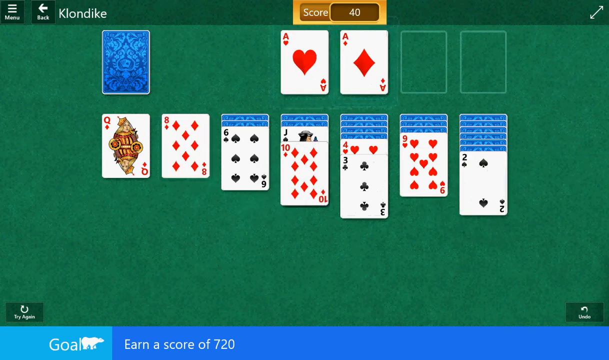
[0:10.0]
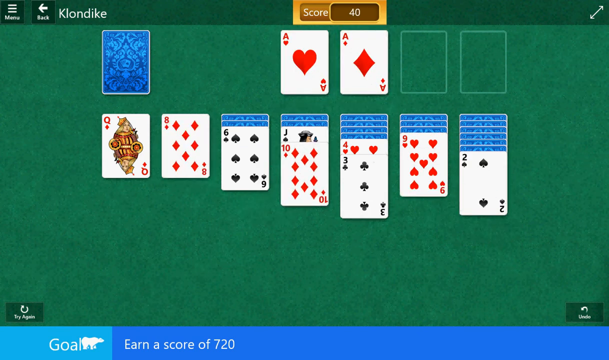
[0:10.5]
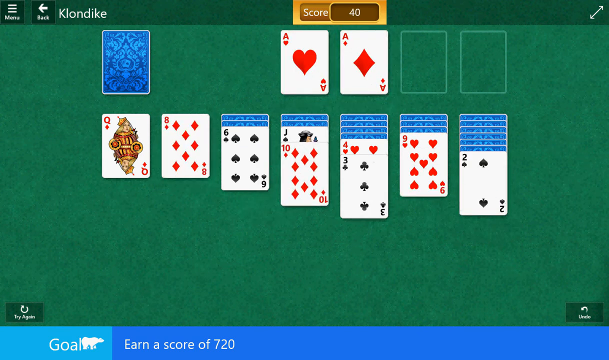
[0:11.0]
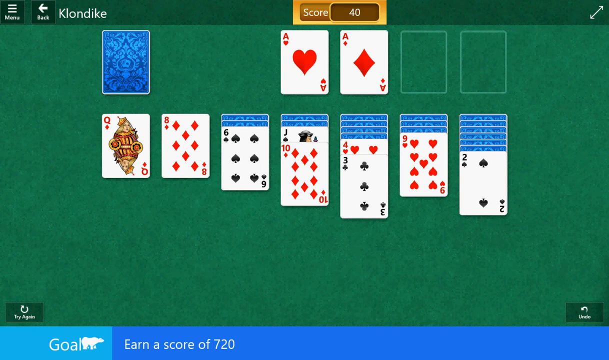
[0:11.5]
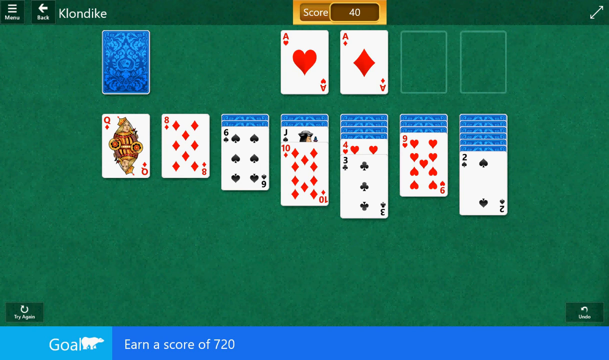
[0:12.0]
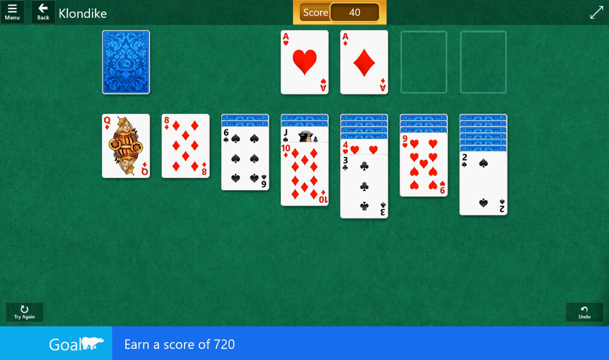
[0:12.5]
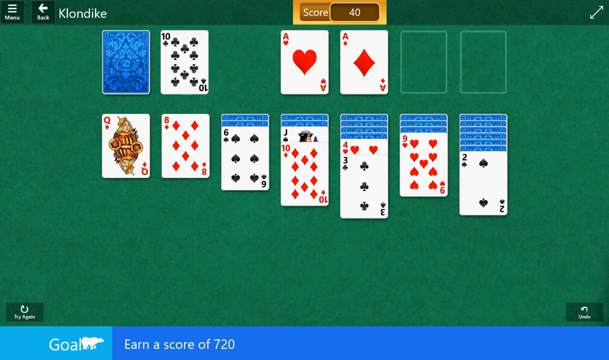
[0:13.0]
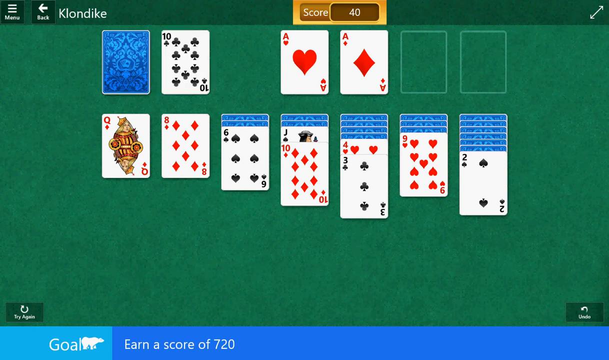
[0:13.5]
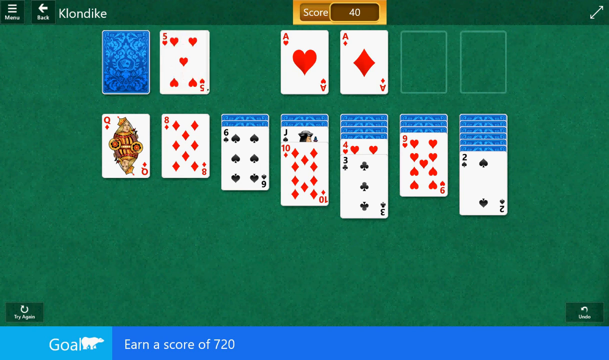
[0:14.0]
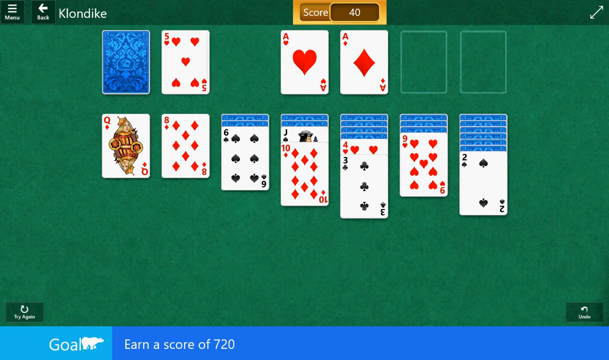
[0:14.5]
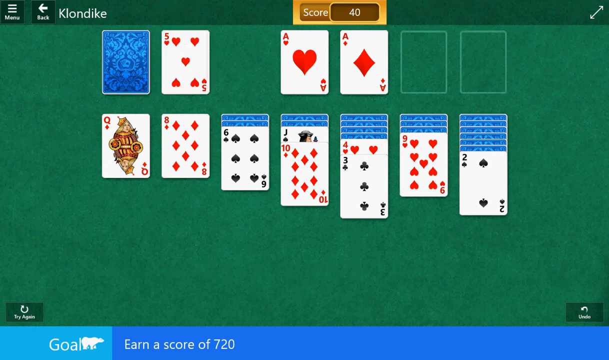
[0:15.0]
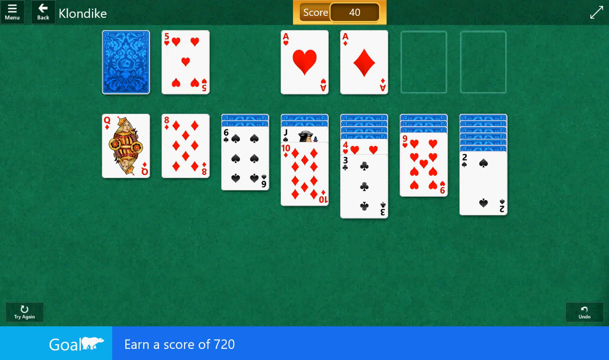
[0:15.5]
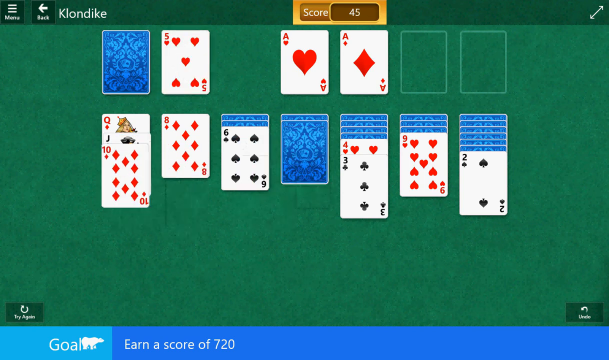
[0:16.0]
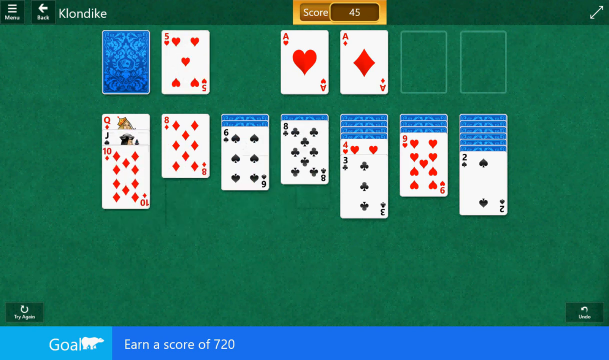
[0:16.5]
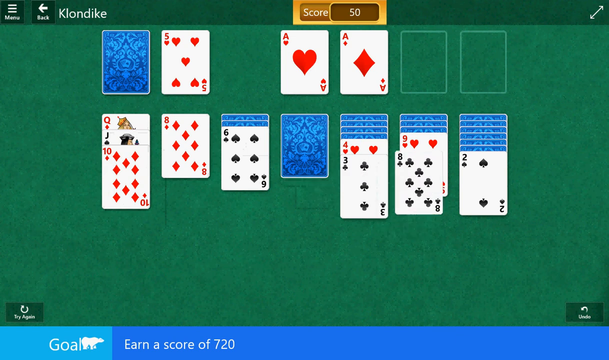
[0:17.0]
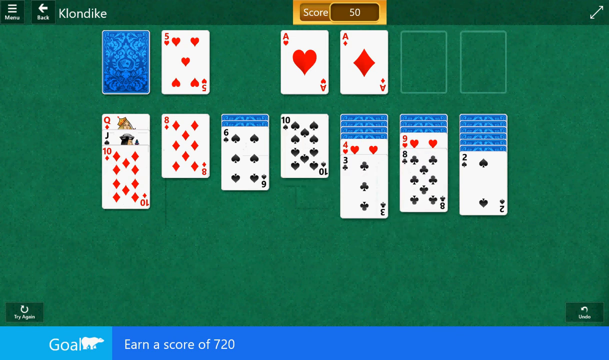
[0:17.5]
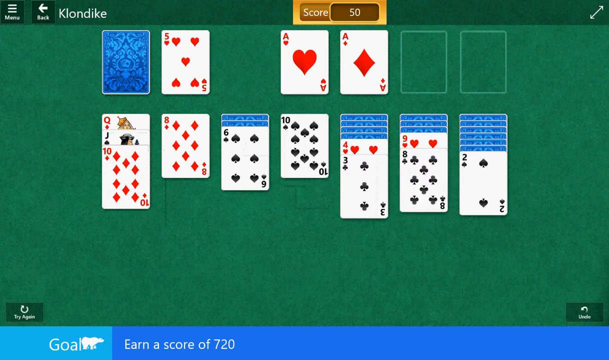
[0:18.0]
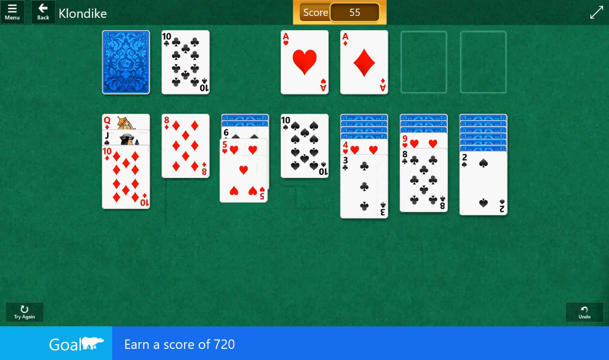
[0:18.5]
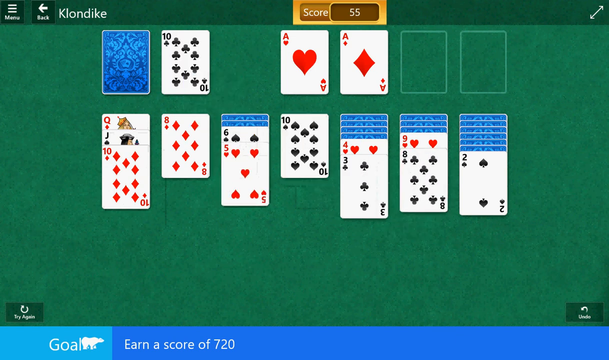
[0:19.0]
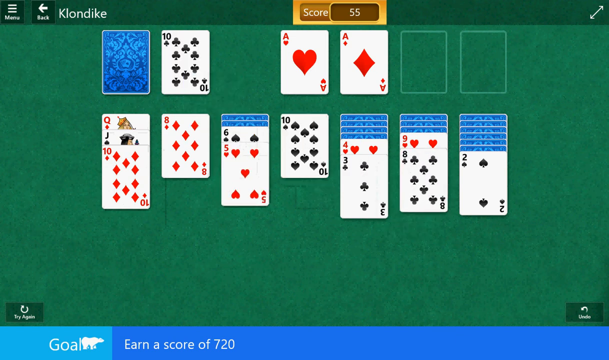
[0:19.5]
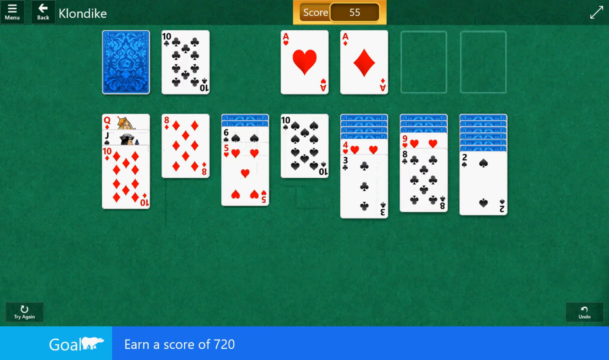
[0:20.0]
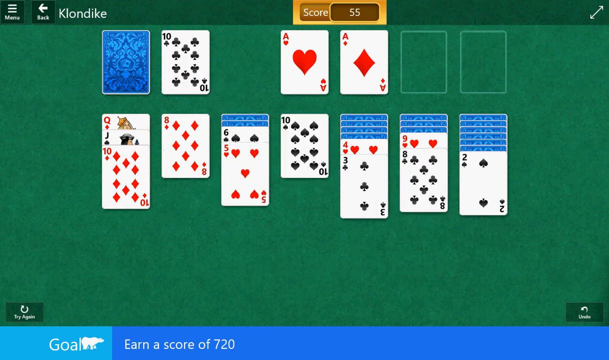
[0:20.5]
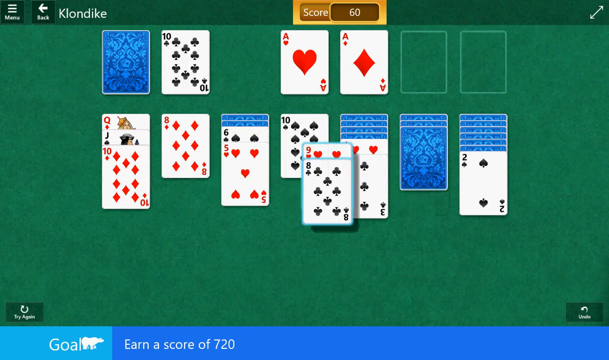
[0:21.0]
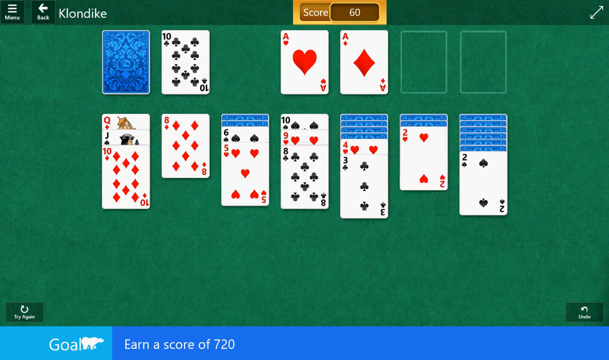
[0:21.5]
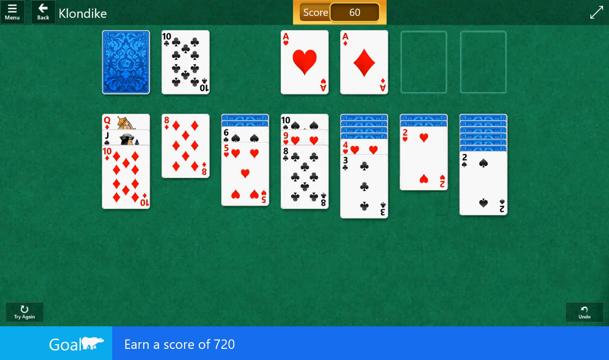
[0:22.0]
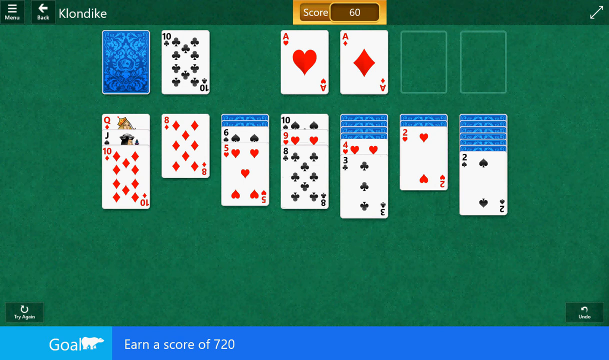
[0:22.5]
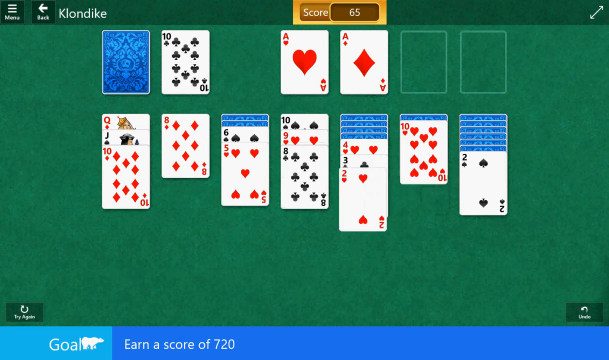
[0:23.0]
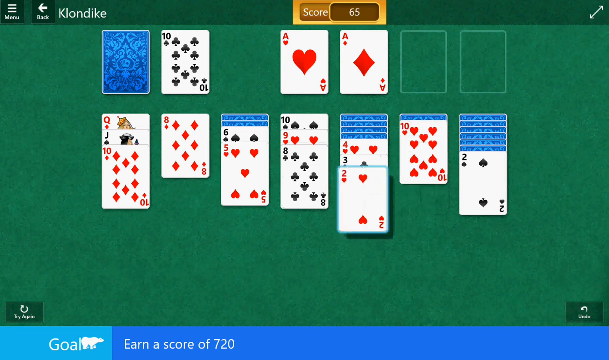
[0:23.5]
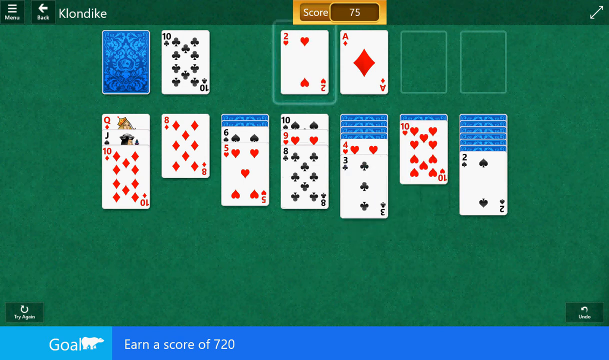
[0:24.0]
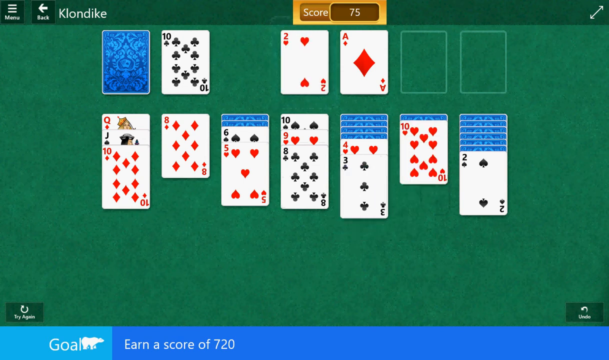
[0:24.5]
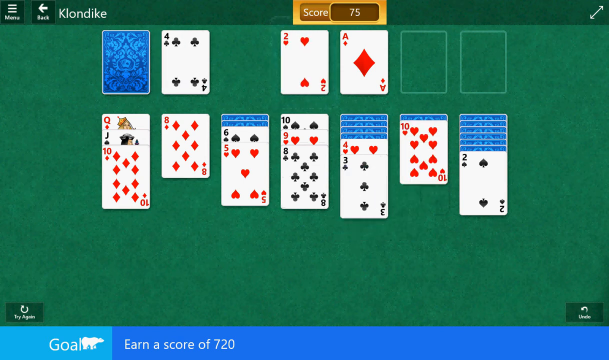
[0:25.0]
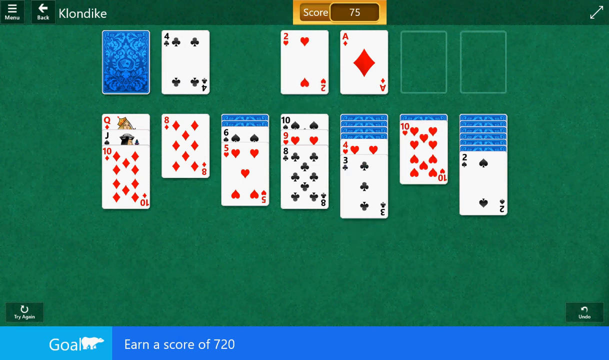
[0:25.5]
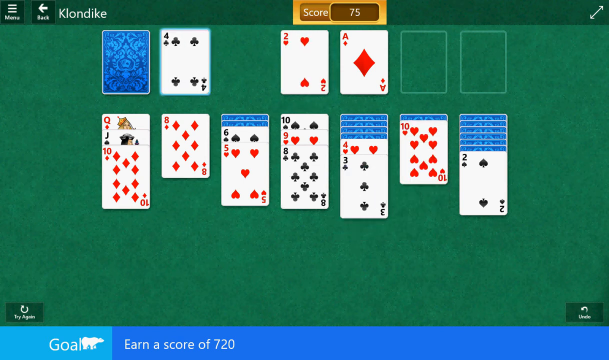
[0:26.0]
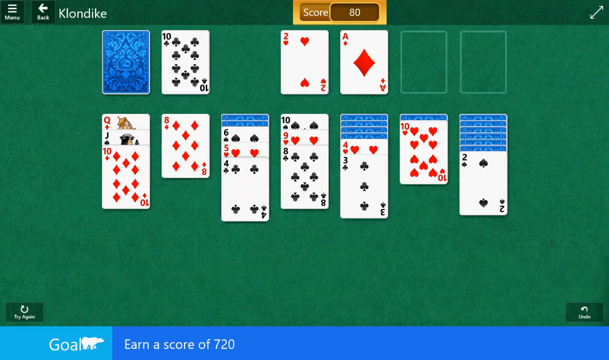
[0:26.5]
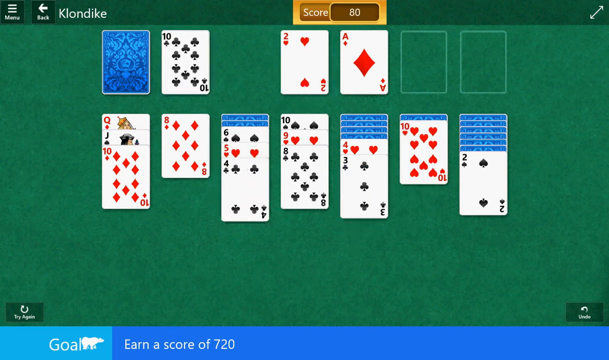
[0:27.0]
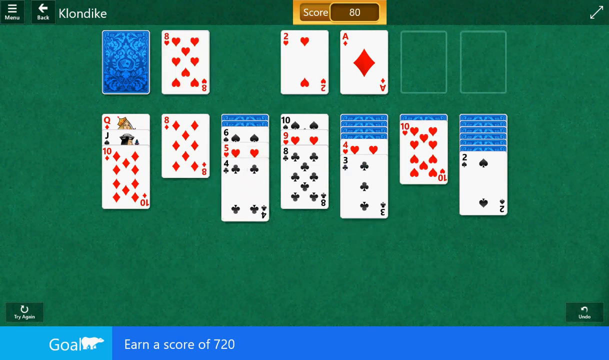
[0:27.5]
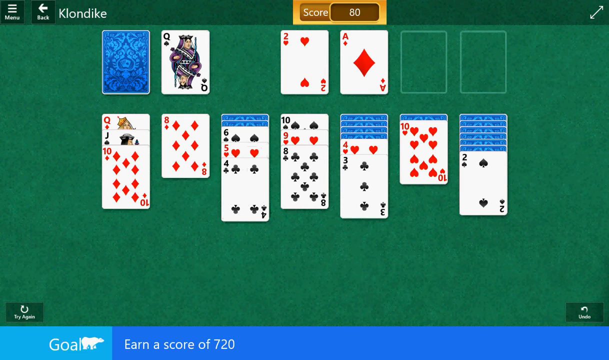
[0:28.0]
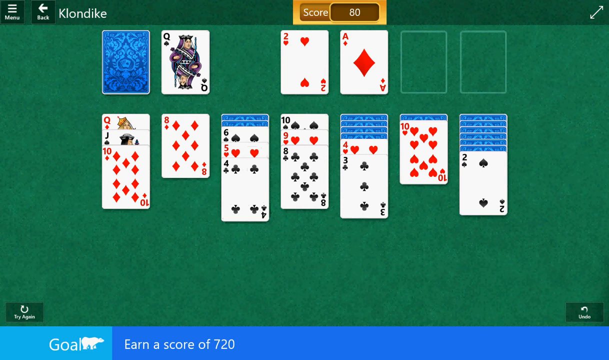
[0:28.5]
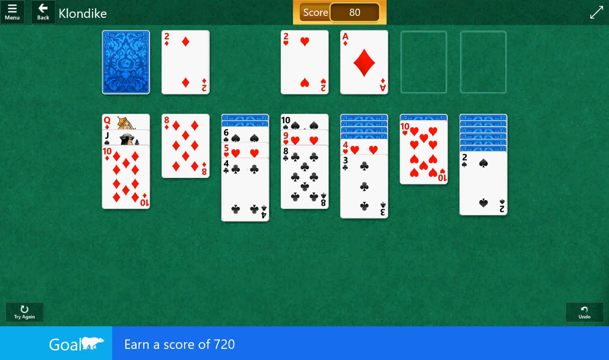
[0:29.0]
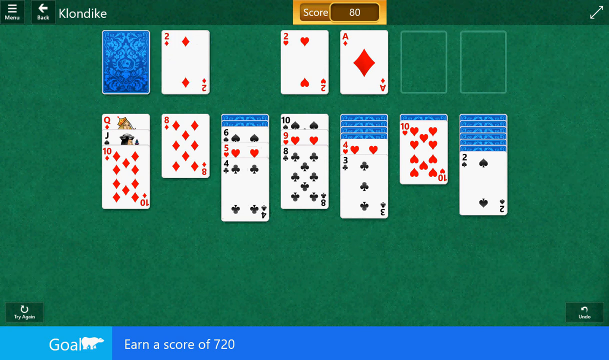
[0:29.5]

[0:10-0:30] A solitaire game is shown on a screen with an all-green background. The cards are blue on one side and show the card face on the other. Several cards have been moved, and the two of hearts is put up on the ace of hearts. The stacks at the bottom get longer as new cards are added, going downwards. At the top, a blue card is turned up, and when flipped it shows the white face with diamonds, spades, clubs, or hearts. At the top is a section labeled "menu" with three bars, a back button labeled "back" with an arrow pointing to the left, and the word "Klondike" in the upper corner, the name of the game.